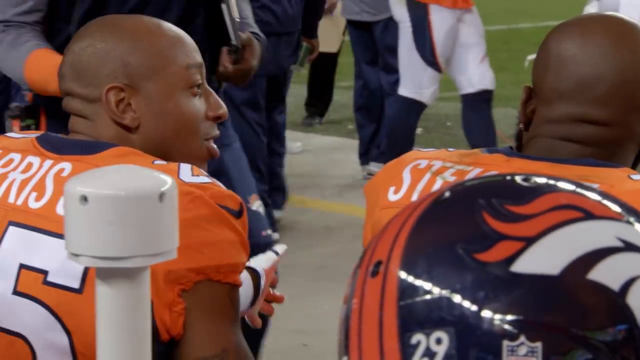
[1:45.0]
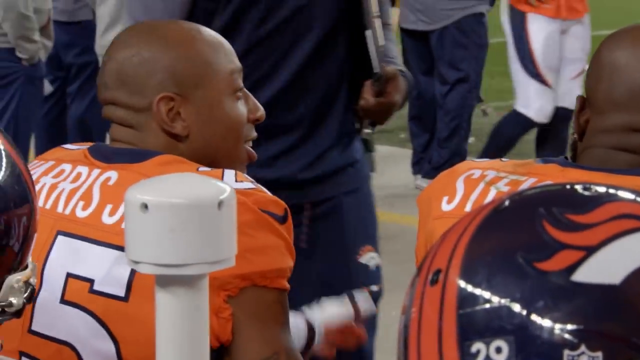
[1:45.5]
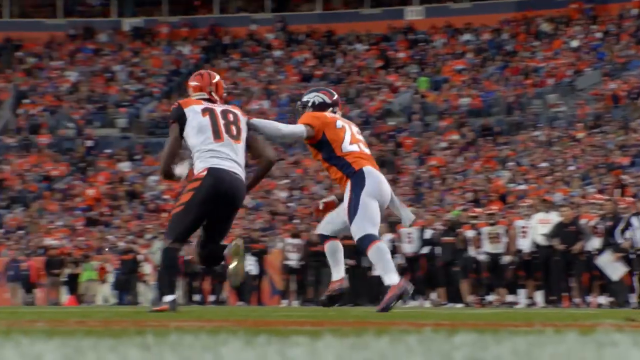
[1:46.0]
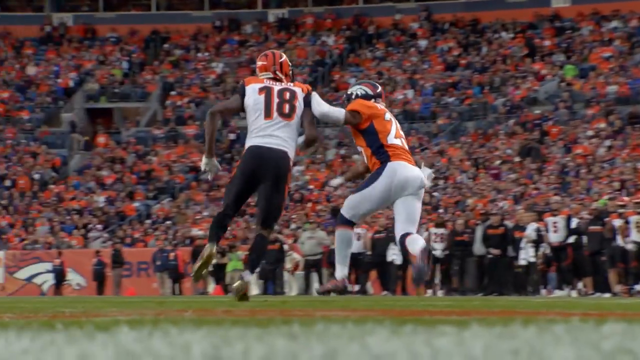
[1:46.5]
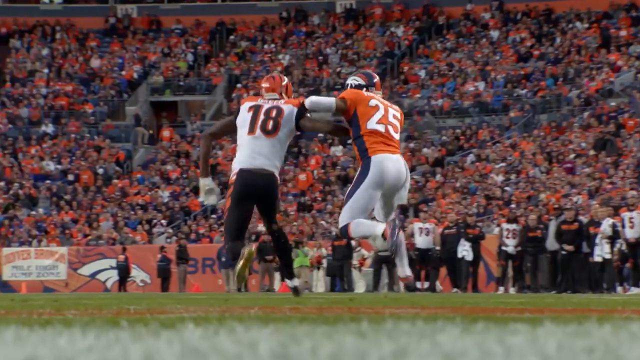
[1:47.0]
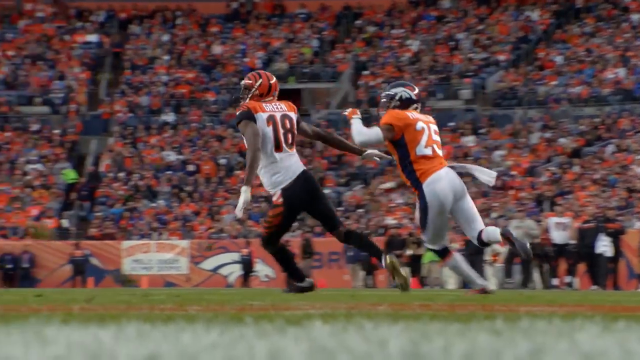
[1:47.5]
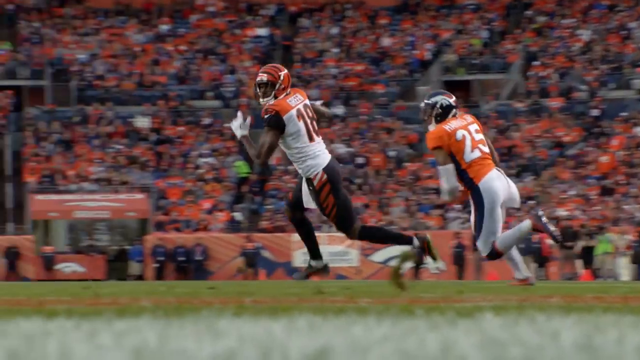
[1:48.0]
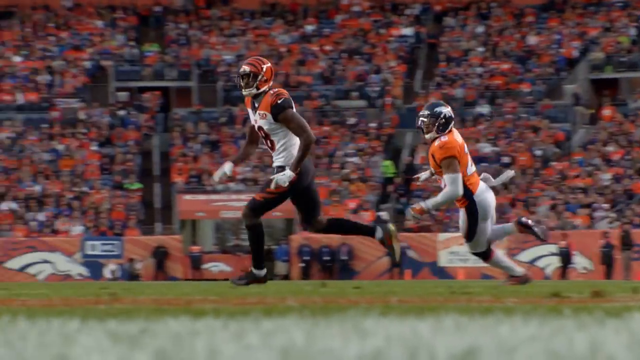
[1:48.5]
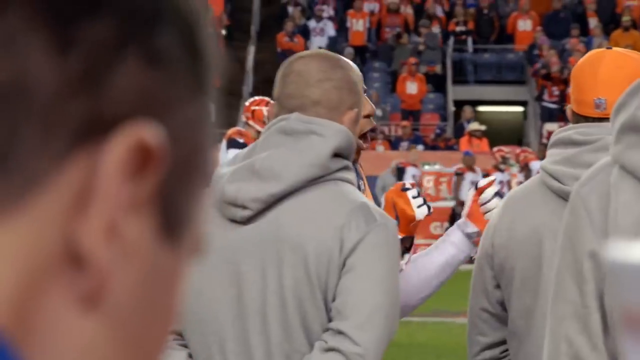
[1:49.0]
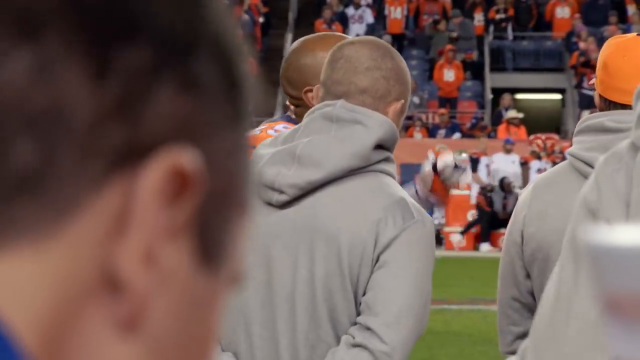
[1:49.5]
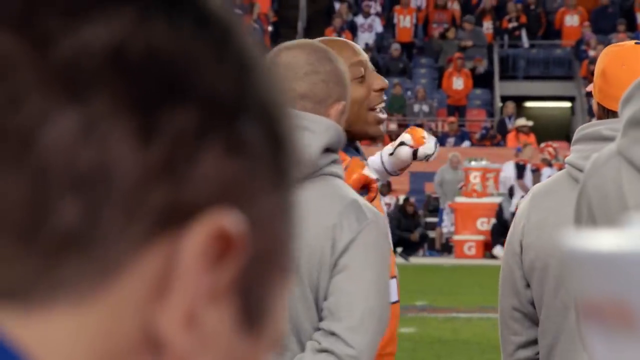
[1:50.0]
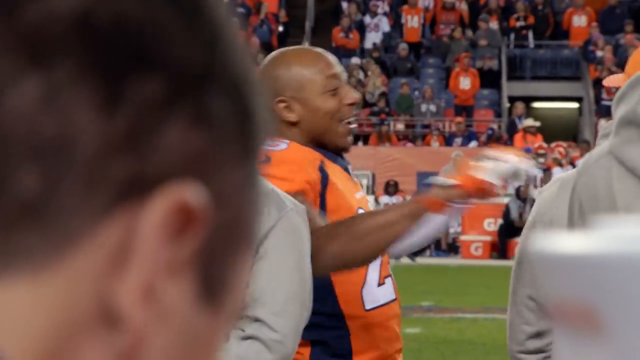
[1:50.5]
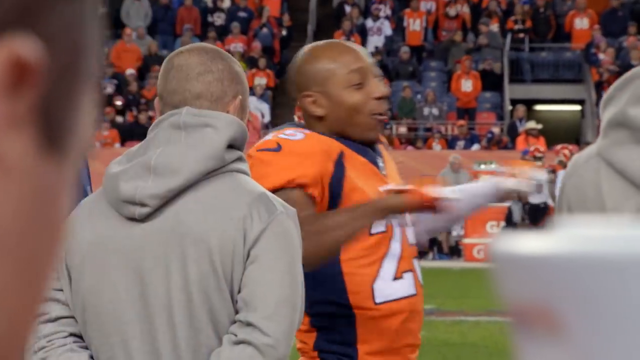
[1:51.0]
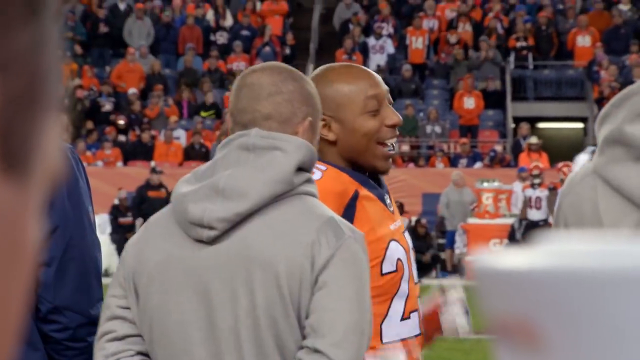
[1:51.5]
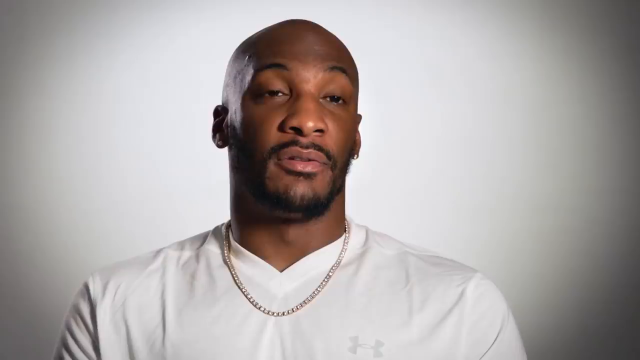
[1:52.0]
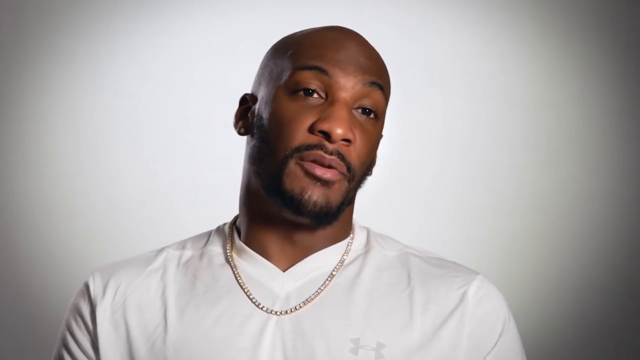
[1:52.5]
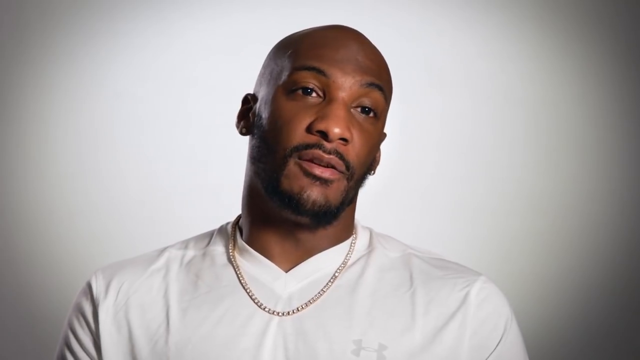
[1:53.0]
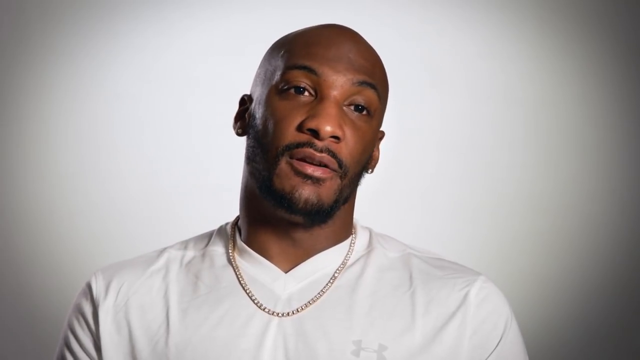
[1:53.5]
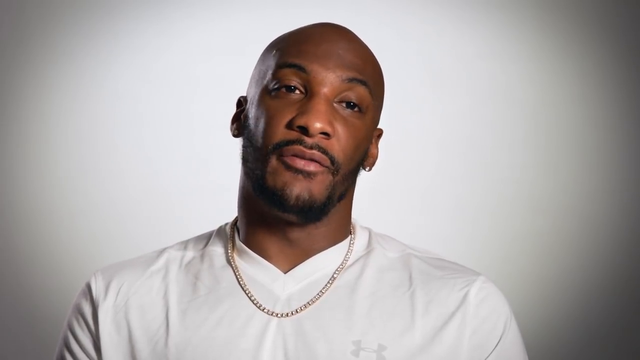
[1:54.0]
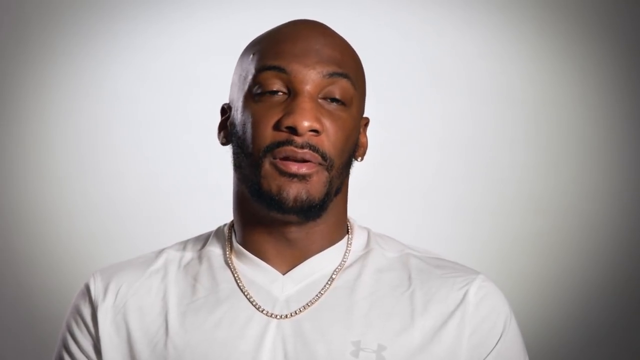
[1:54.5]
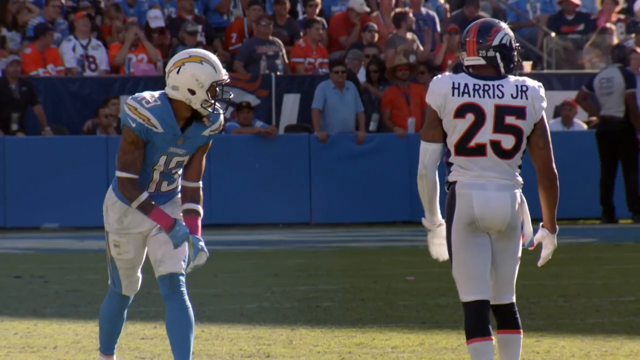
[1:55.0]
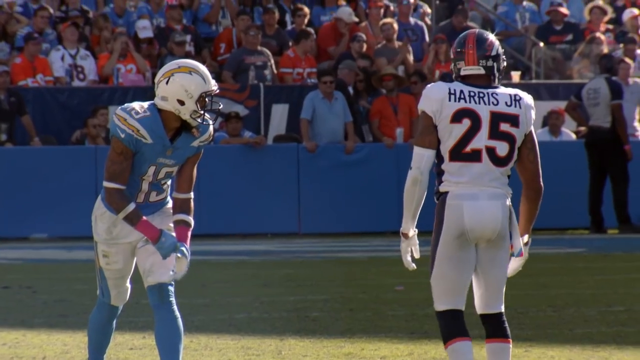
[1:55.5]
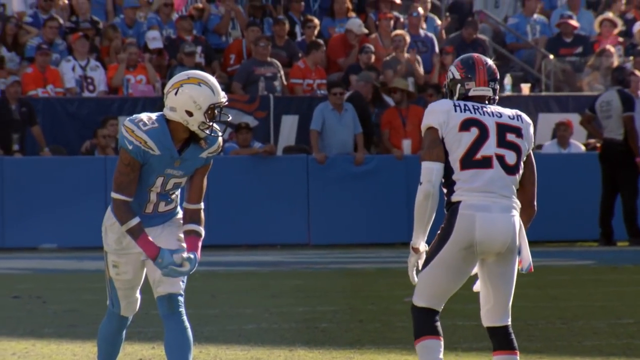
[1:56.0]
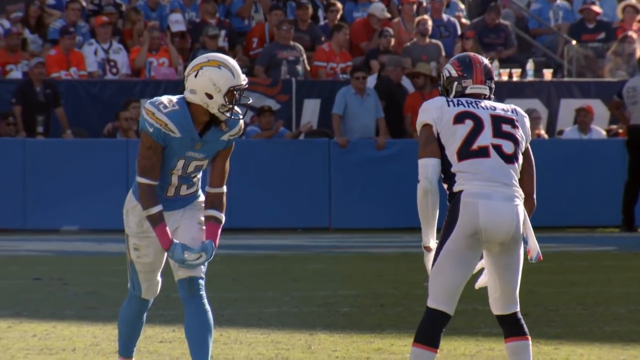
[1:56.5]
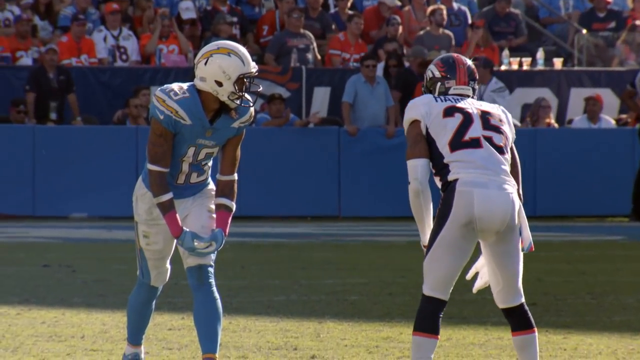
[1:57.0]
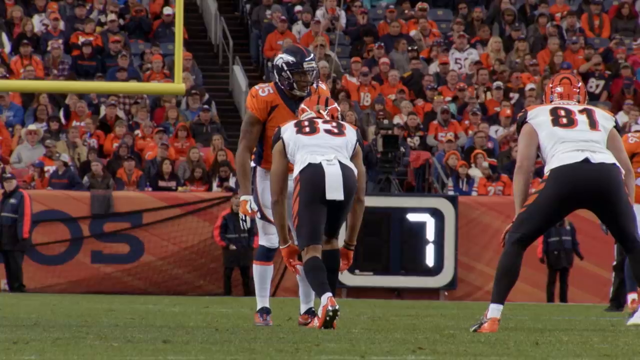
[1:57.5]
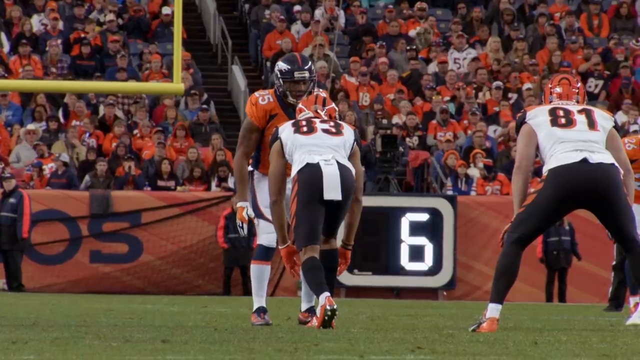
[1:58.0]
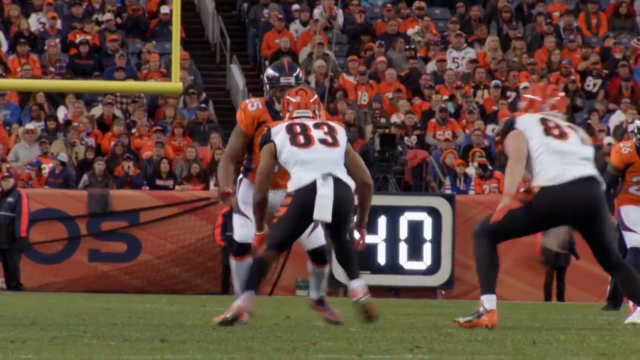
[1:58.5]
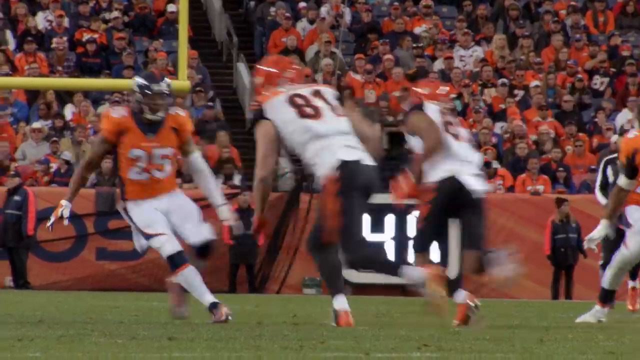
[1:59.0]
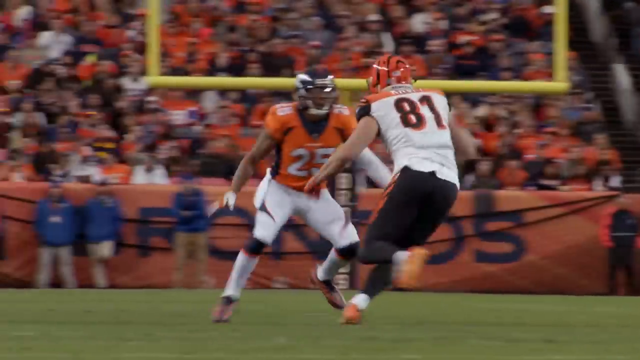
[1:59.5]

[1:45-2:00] Chris Harris Jr. sits on the bench talking to a player who appears to have the last name Stuart. On the field, Harris Jr. has his left arm out, braced against the shoulder of Cincinnati Bengals player Green; he pushes off him, and Green turns and spins away. In what looks like a sideline view, Harris Jr. talks to several coaches in gray hoodies, seeming to laugh enthusiastically and making a pumping, push-off motion with his arms, apparently describing the previous play. The video cuts briefly to a man, apparently Aqib, talking, then to another game where Harris Jr. faces off against number 13 of the San Diego Chargers, then to another clip of him facing off against number 81 of the Cincinnati Bengals.